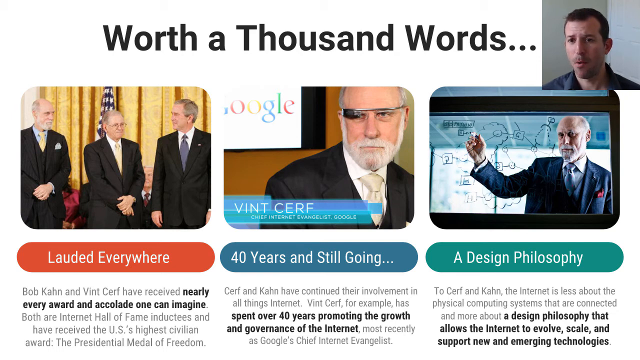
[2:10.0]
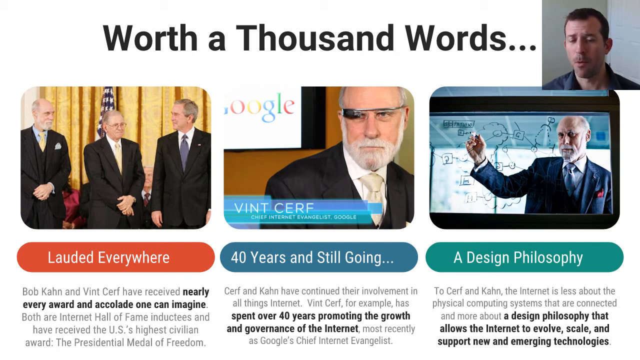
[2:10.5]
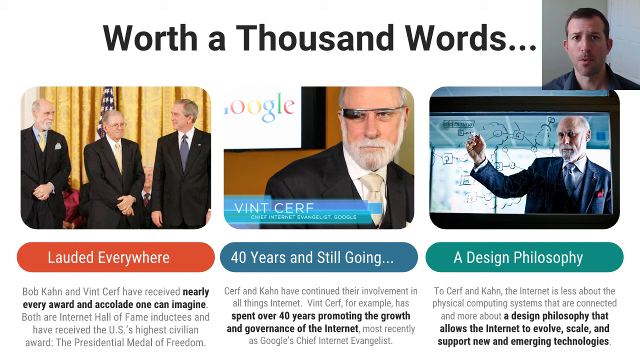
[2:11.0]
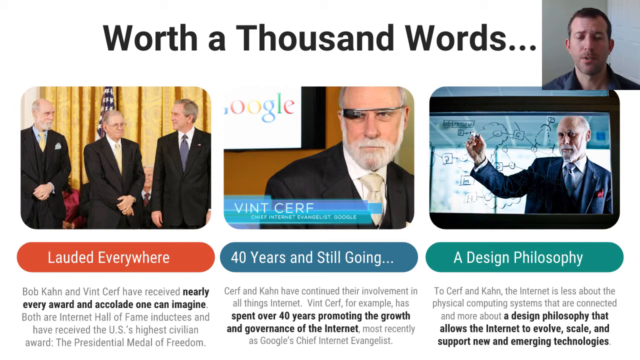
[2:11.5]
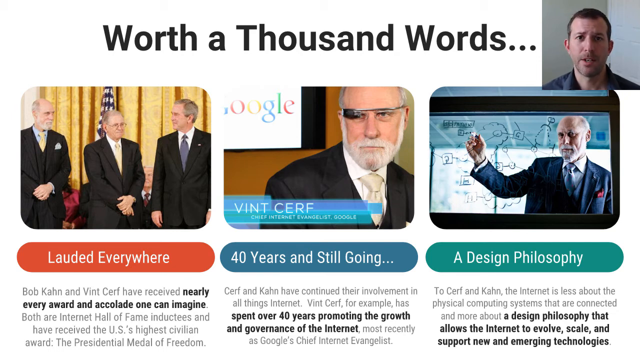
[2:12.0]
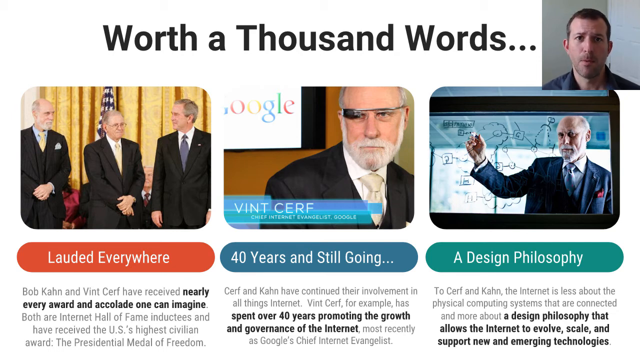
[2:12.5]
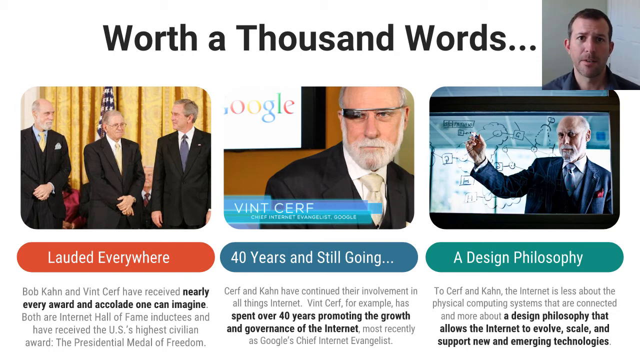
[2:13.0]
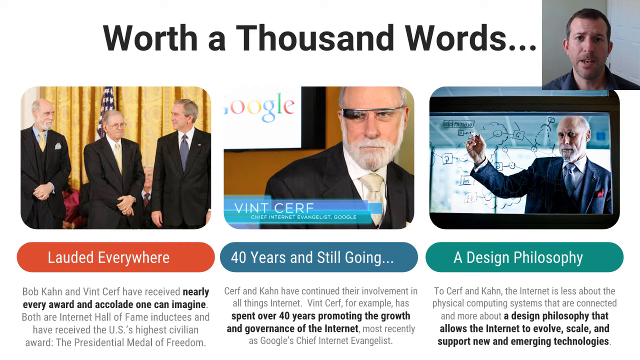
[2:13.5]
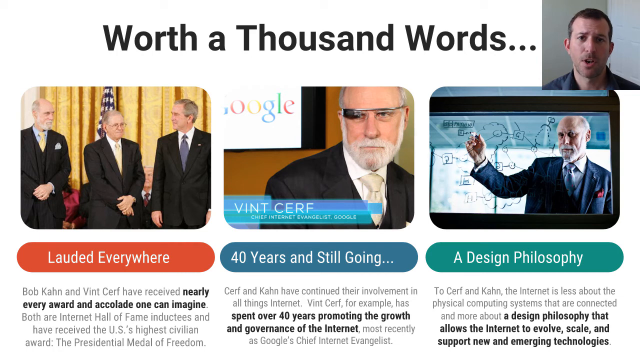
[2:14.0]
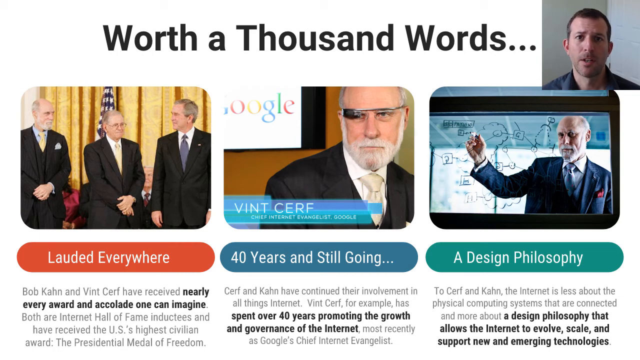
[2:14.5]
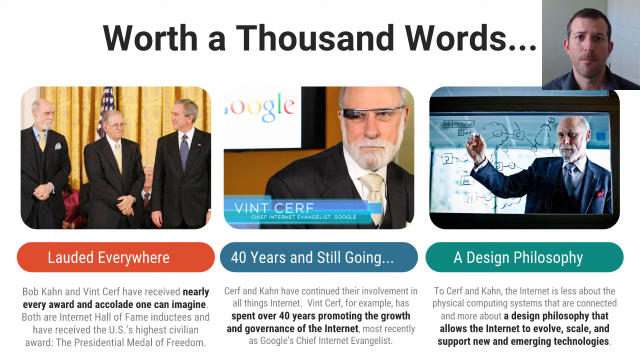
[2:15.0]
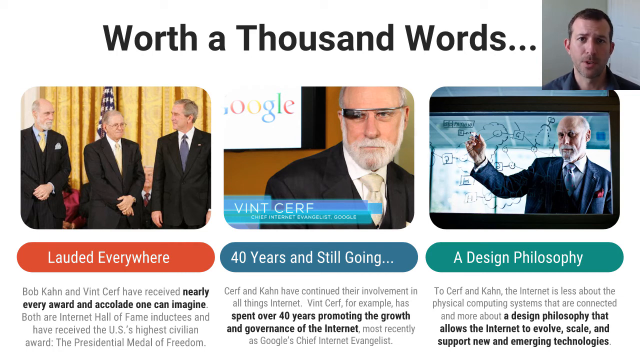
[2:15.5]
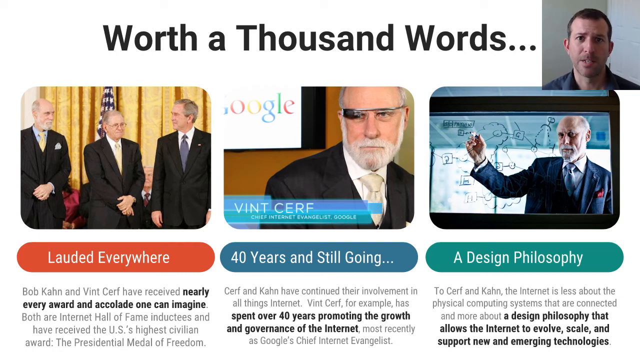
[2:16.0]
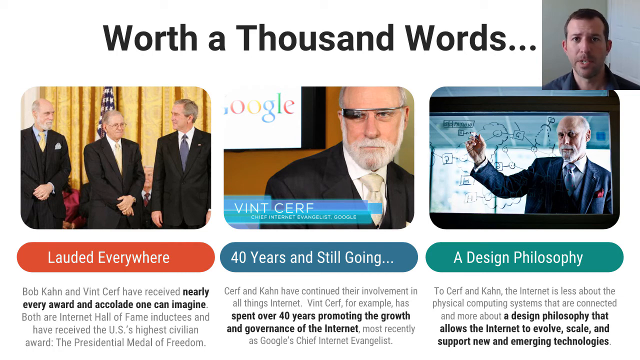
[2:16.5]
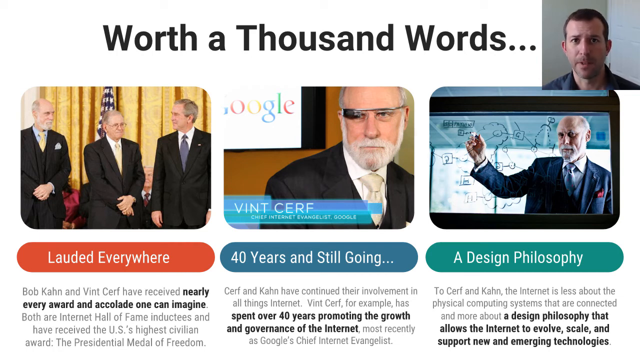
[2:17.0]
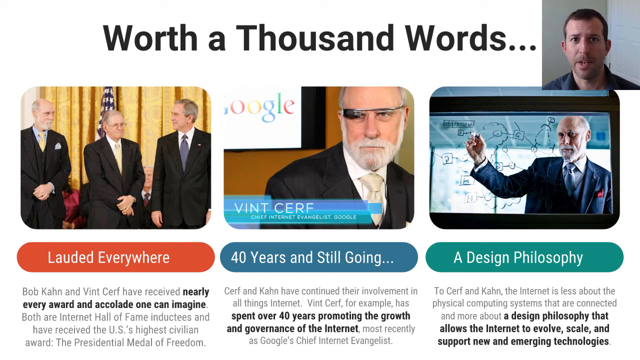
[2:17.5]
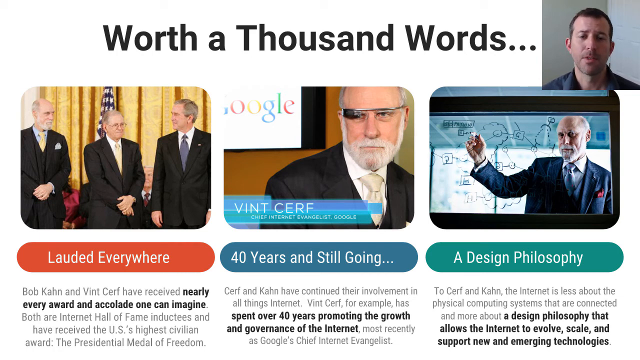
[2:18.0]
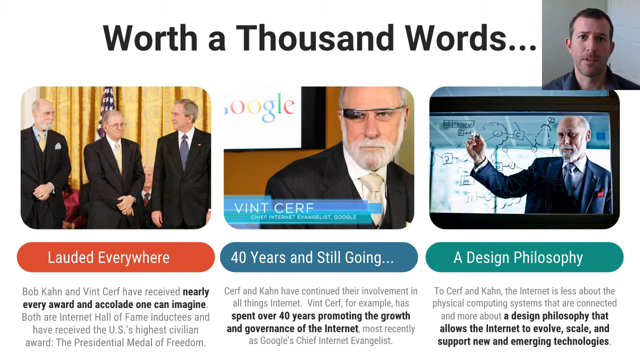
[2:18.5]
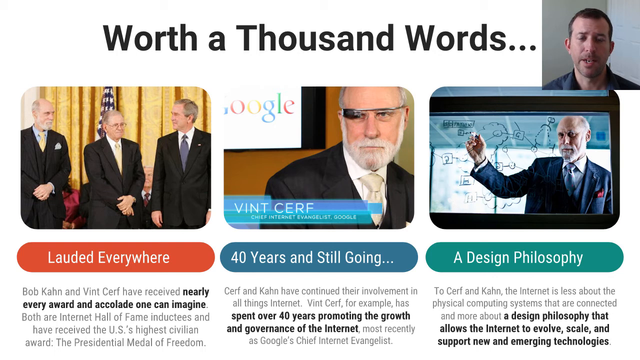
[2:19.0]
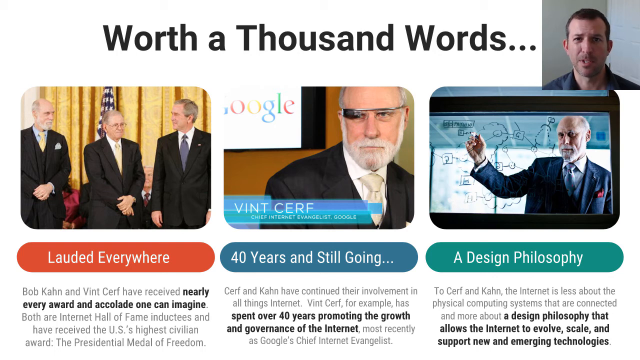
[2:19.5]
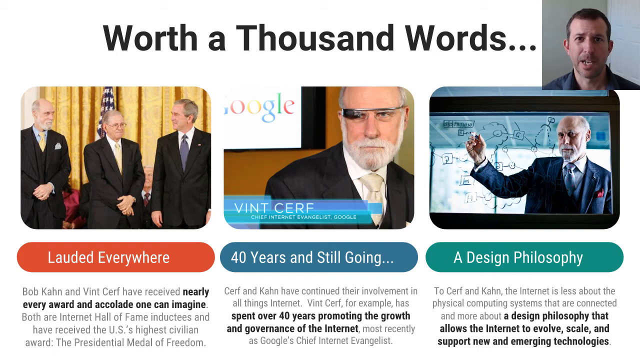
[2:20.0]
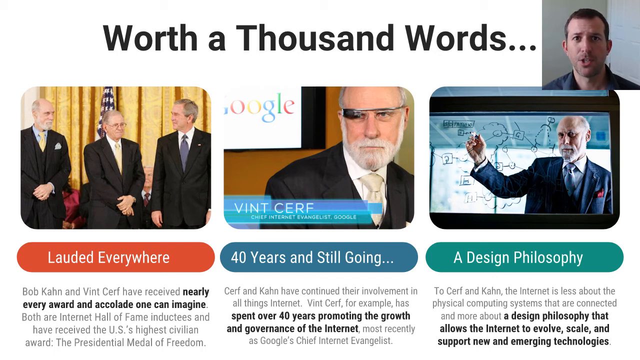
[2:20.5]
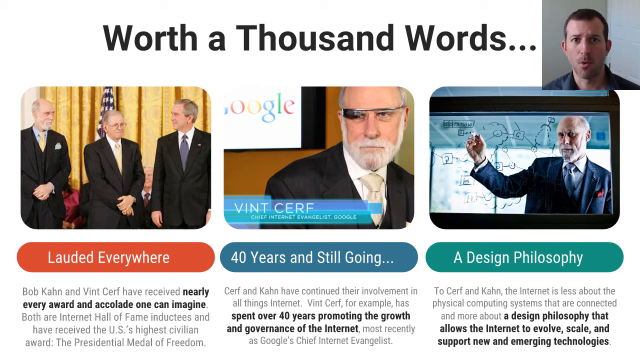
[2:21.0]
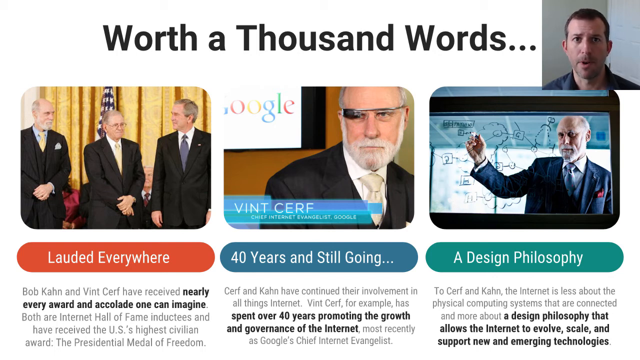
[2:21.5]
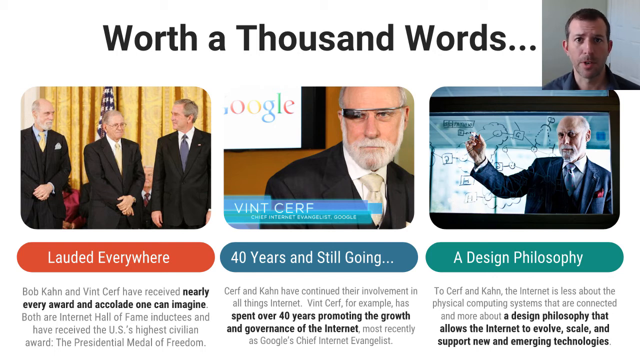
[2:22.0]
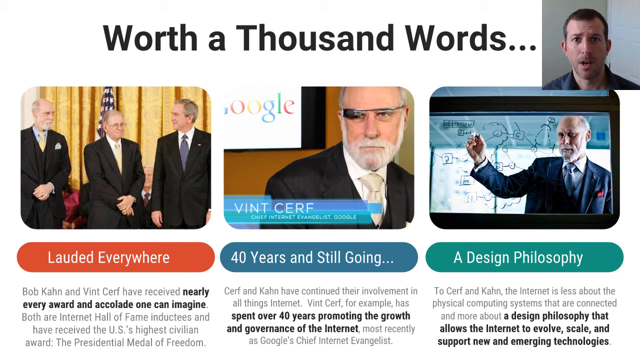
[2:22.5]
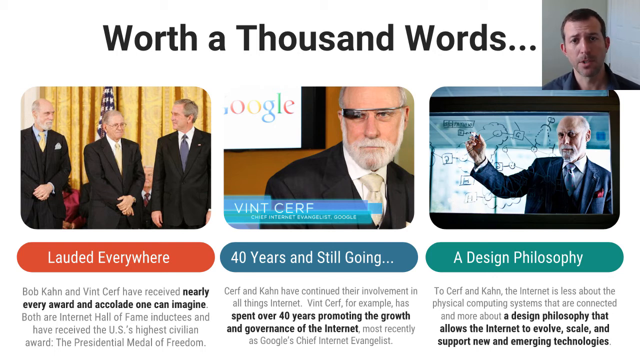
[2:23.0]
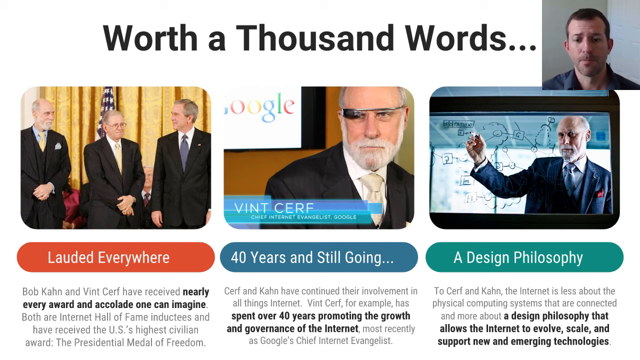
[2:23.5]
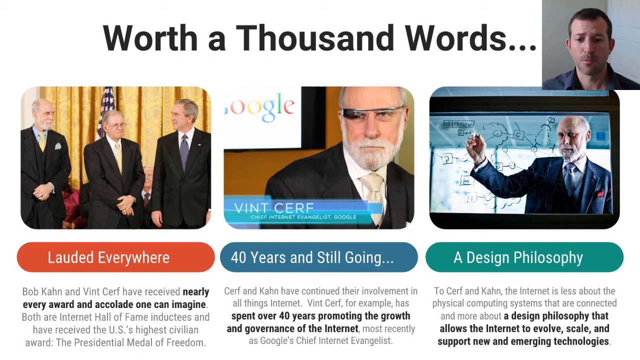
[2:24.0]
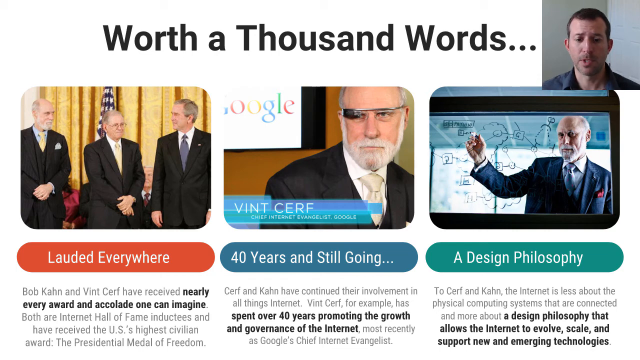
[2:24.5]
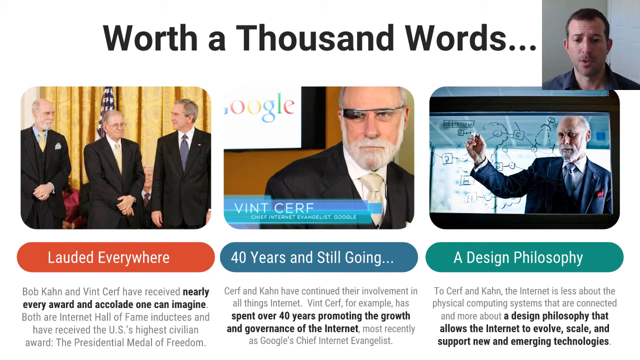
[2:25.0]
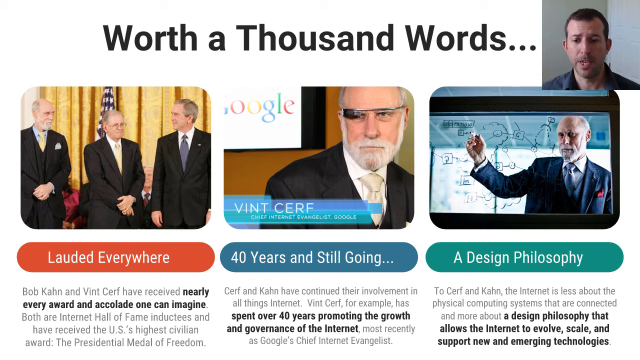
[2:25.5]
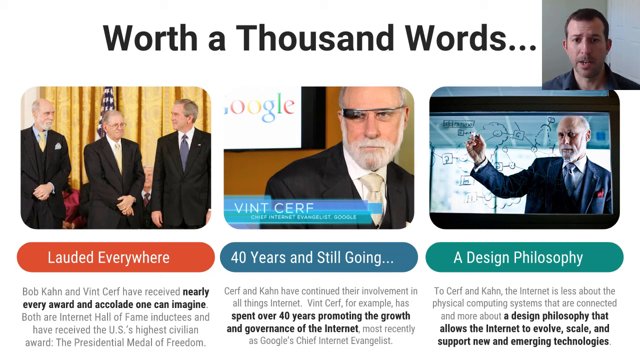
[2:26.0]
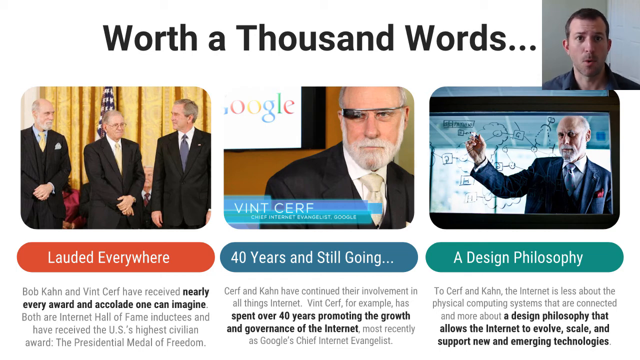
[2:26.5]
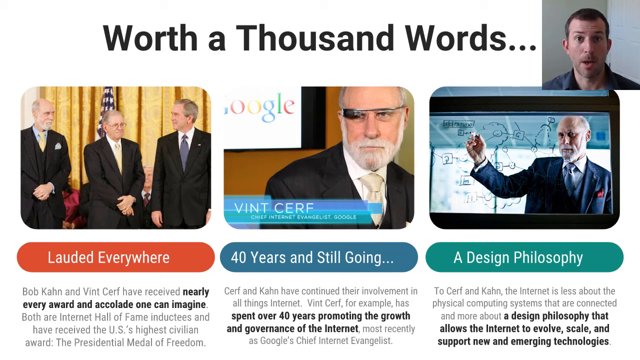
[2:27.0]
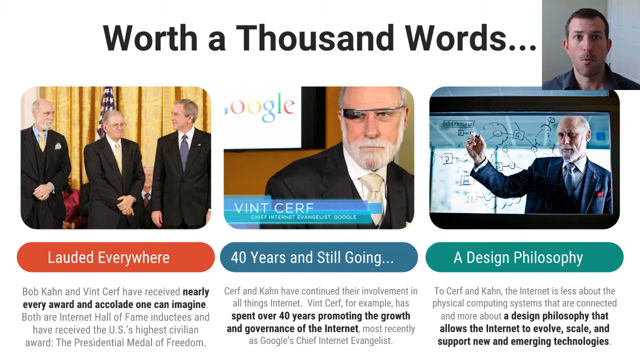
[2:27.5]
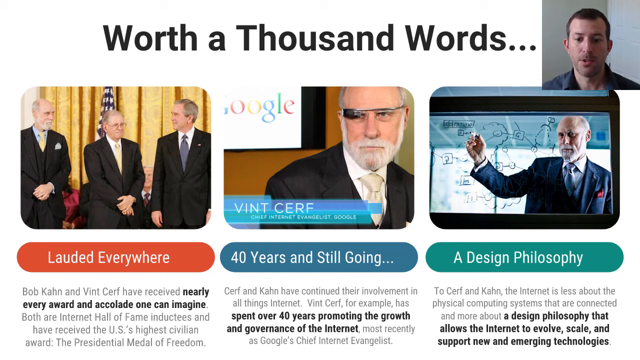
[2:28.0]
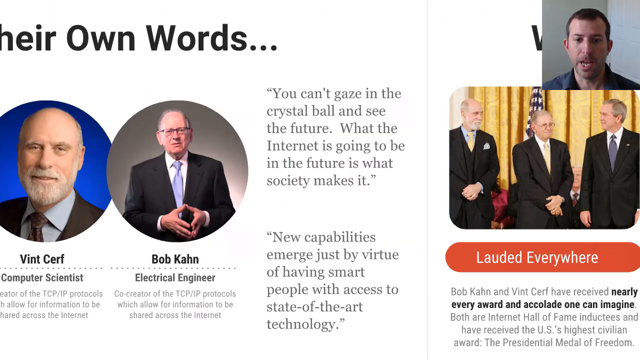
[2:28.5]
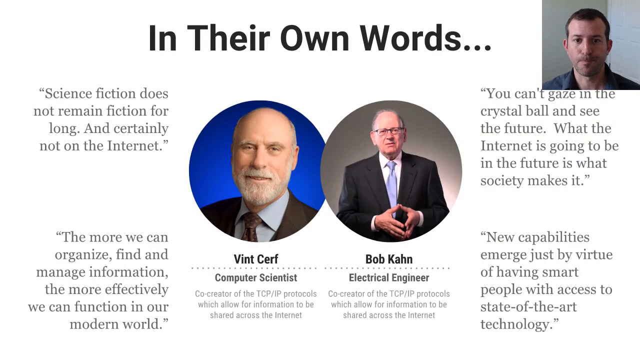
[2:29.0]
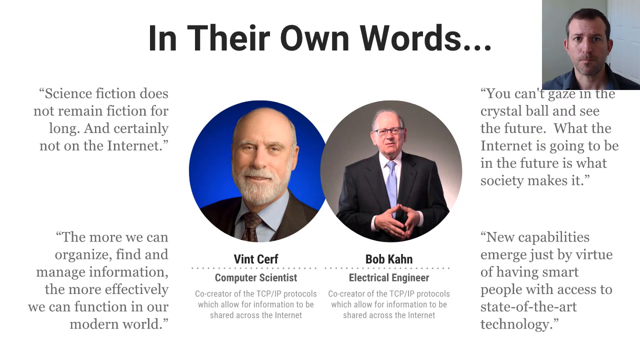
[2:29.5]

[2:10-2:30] The narrator in the video box at the top right of the screen continues narrating the images on the slide, with a somewhat serious expression. He doesn't blink often, but when he does, he blinks two or three times in quick succession. Sometimes he looks down at his monitor or keyboard and at other times at the camera. Right before a new slide appears, he looks down and moves his right arm slightly; a few seconds later another slide appears from the left, moving quickly to the right. His expression mostly doesn't change, though sometimes he opens his eyes wide as if to express surprise or show that something impressive happened. His face is well exposed, and he sits against a white background that looks like a white wall.